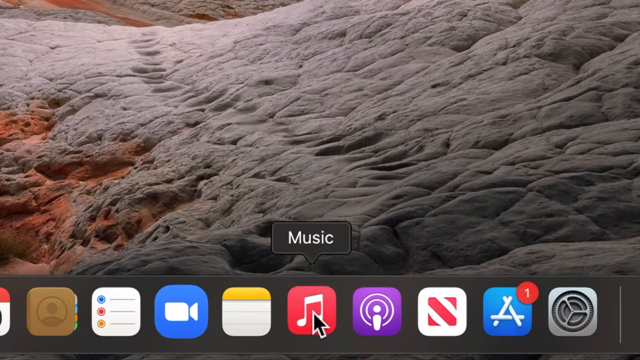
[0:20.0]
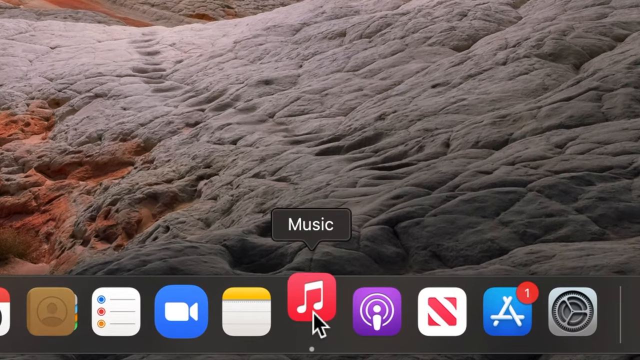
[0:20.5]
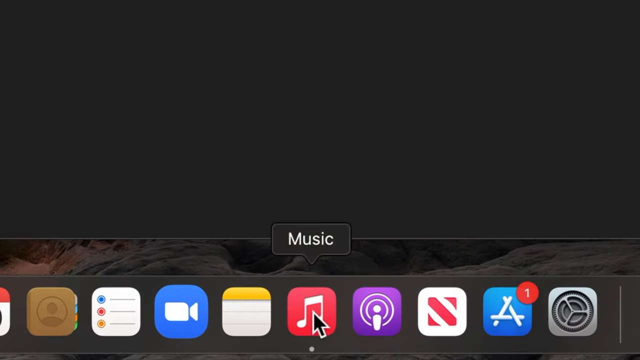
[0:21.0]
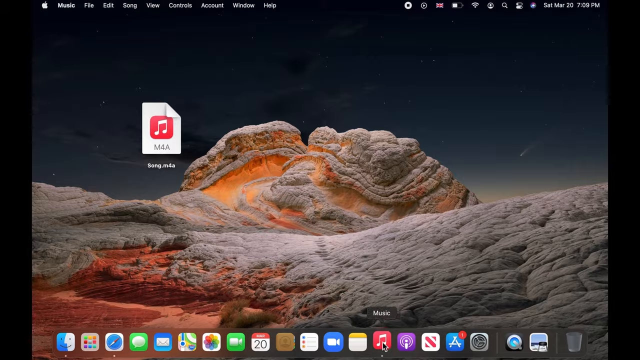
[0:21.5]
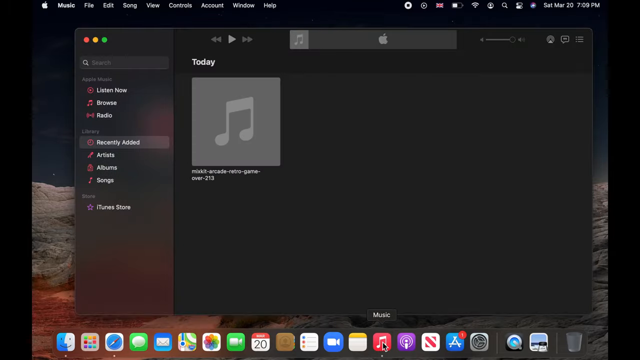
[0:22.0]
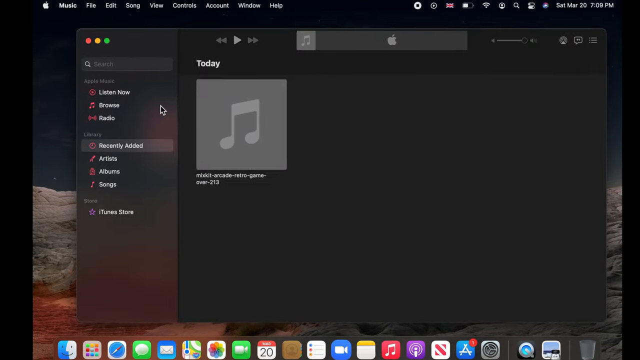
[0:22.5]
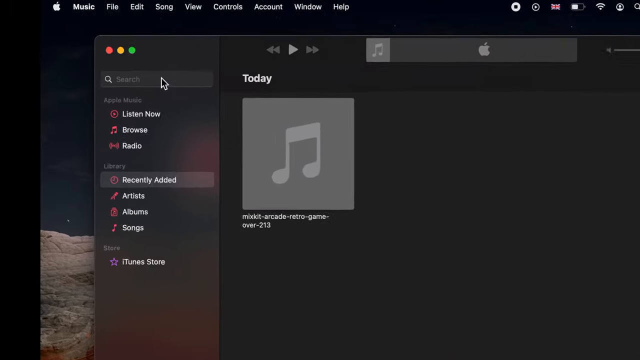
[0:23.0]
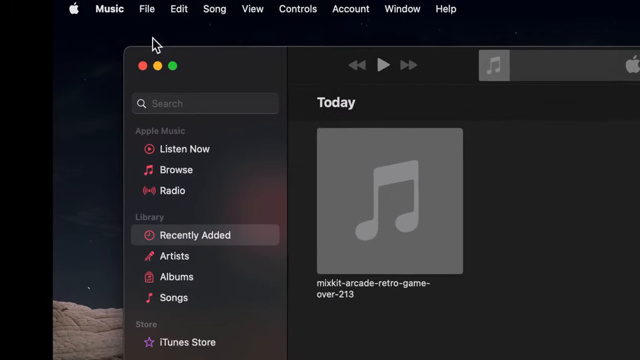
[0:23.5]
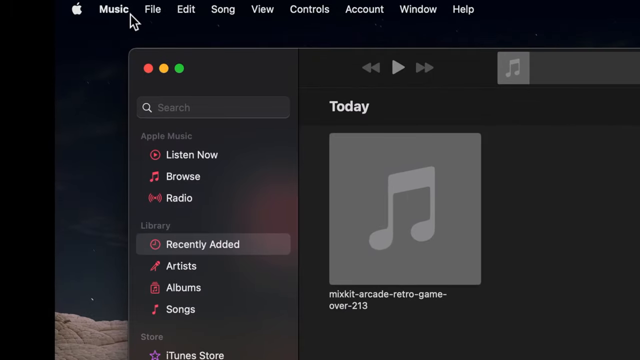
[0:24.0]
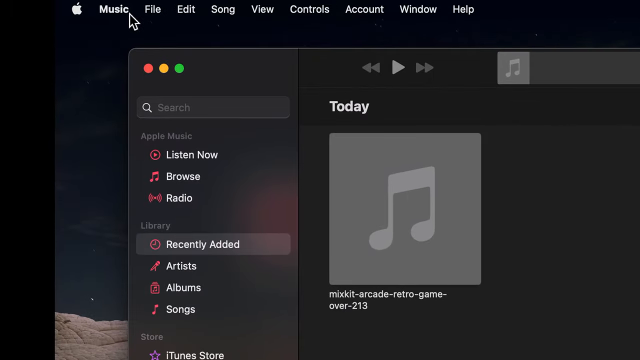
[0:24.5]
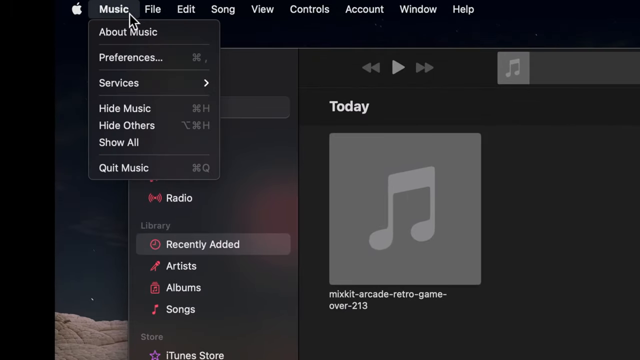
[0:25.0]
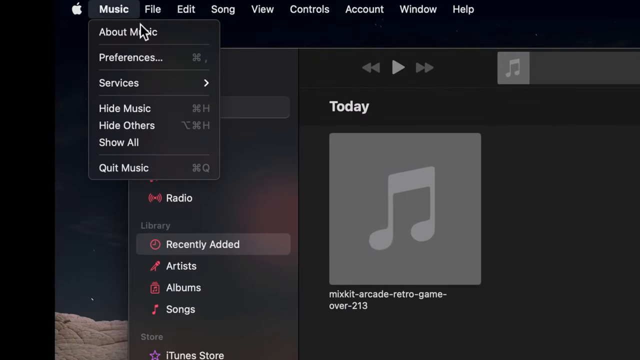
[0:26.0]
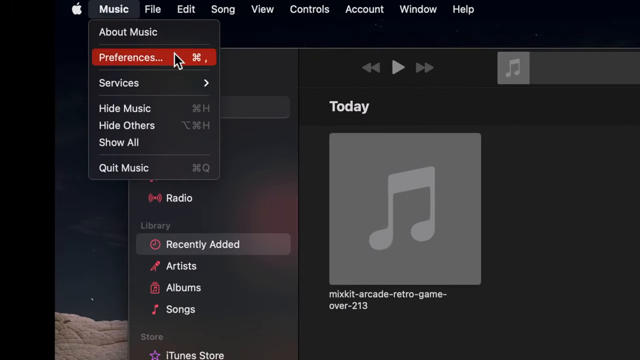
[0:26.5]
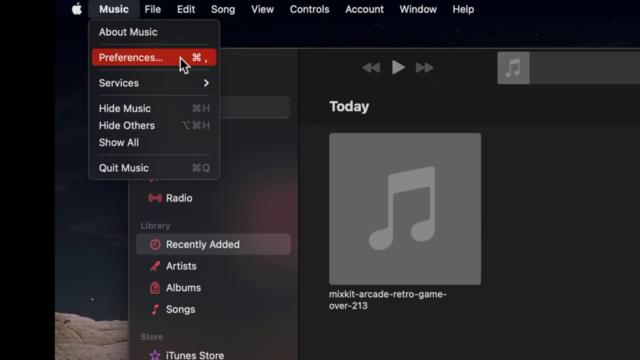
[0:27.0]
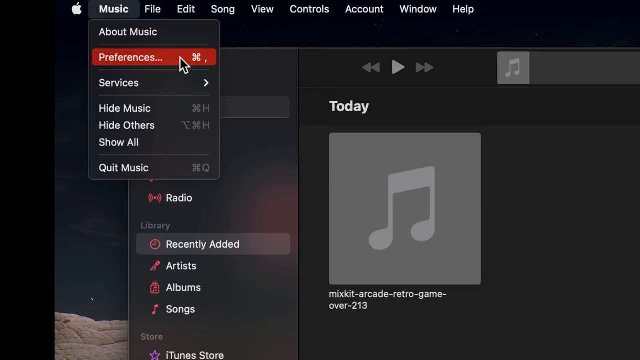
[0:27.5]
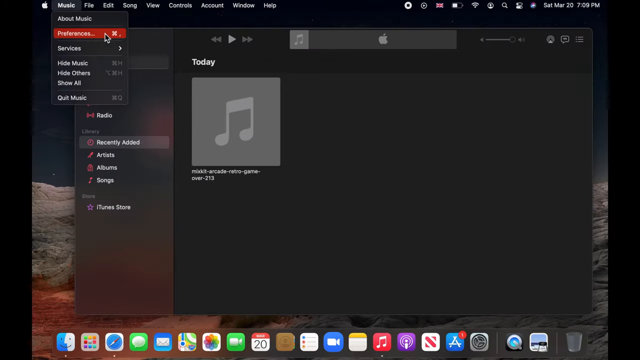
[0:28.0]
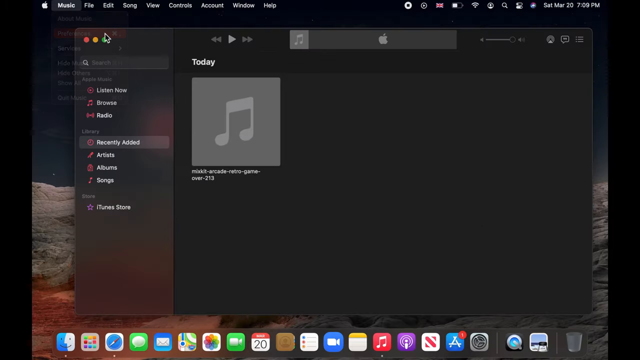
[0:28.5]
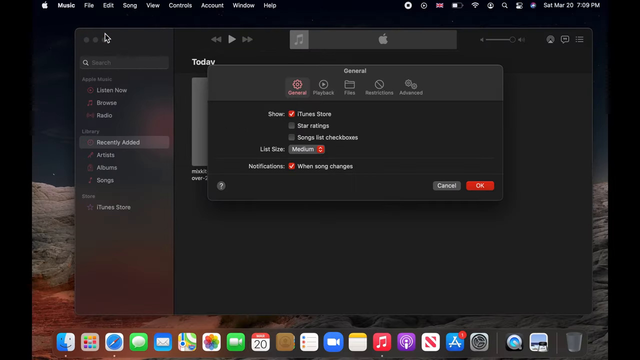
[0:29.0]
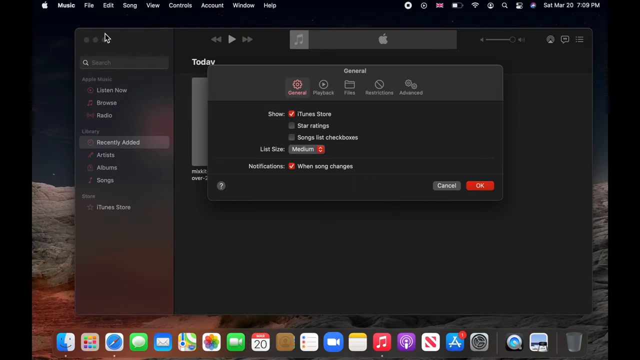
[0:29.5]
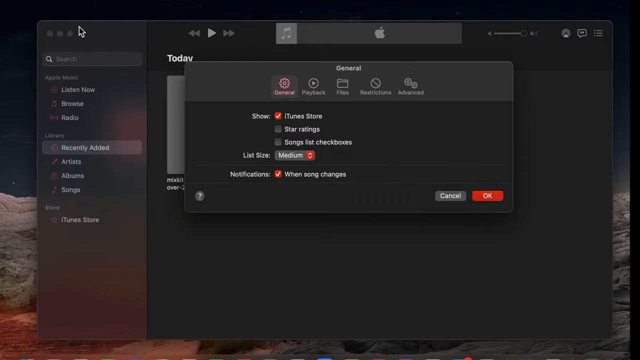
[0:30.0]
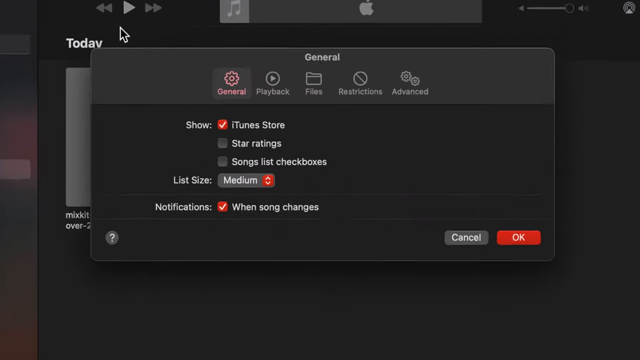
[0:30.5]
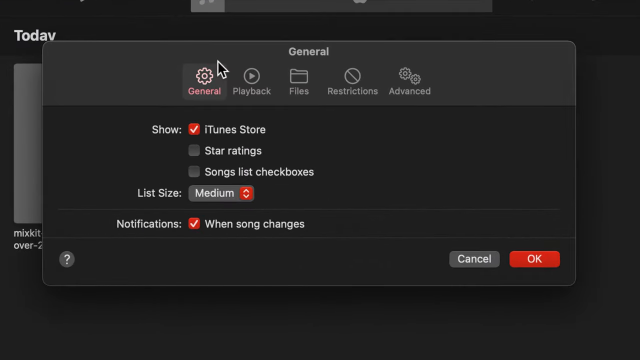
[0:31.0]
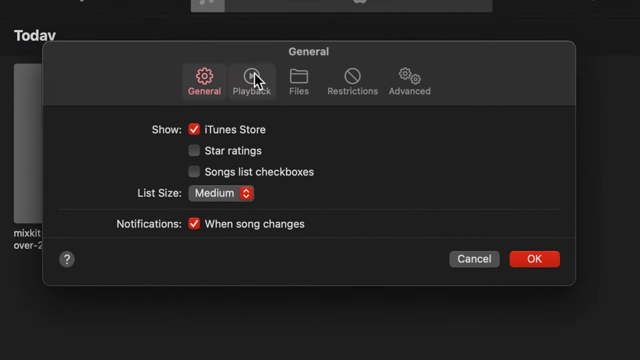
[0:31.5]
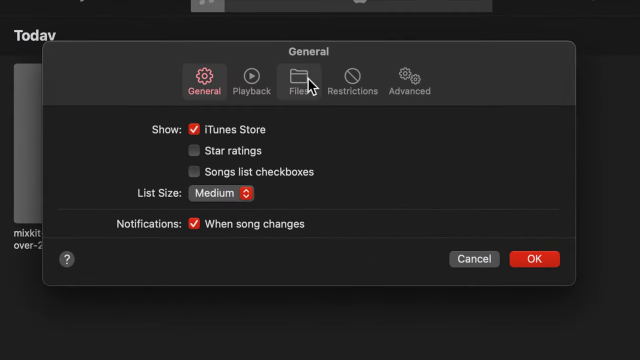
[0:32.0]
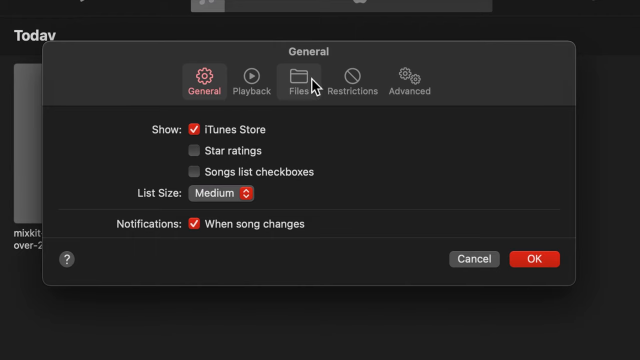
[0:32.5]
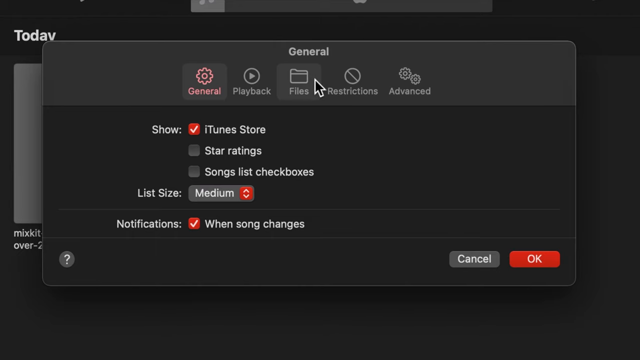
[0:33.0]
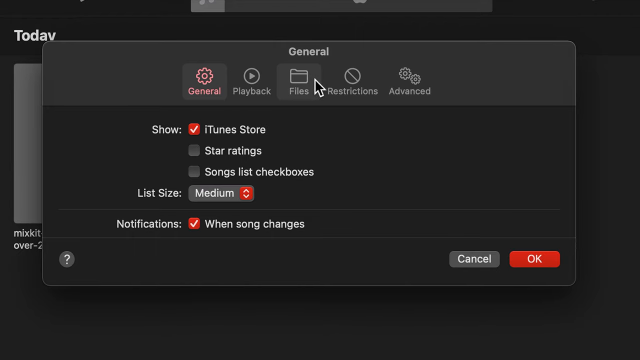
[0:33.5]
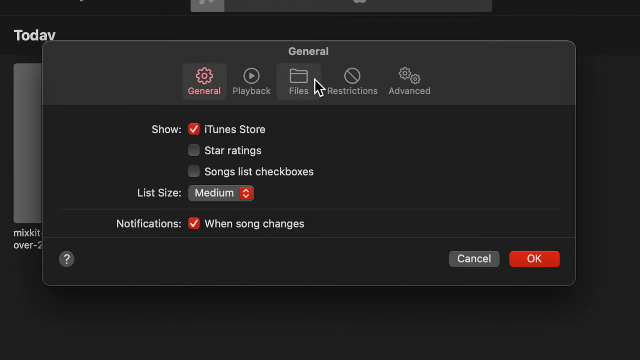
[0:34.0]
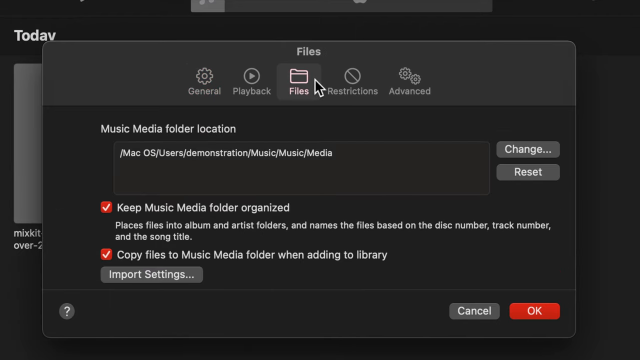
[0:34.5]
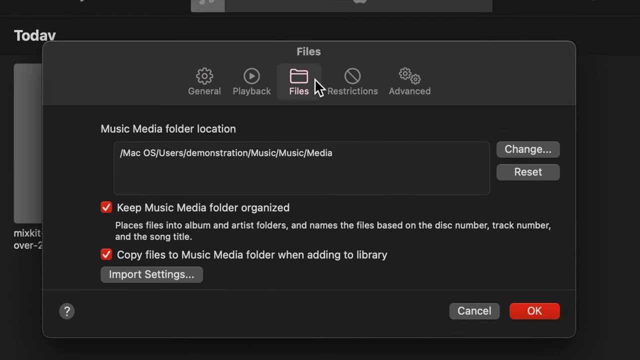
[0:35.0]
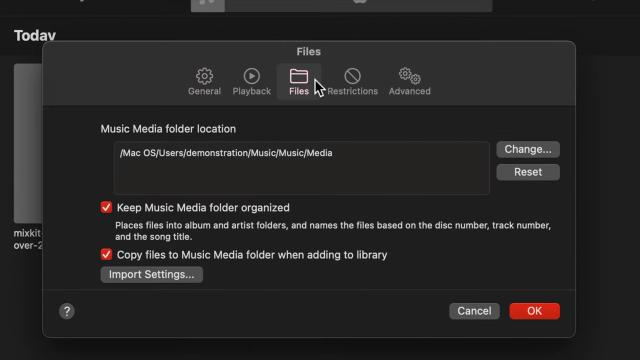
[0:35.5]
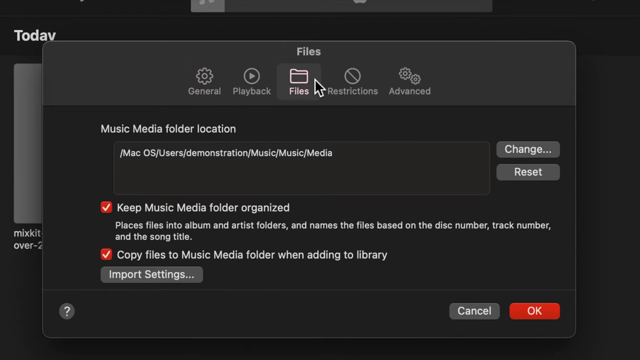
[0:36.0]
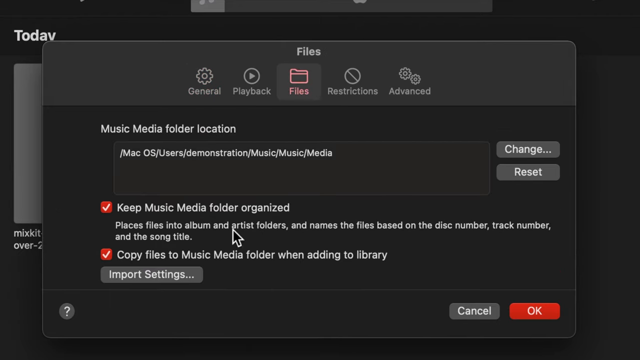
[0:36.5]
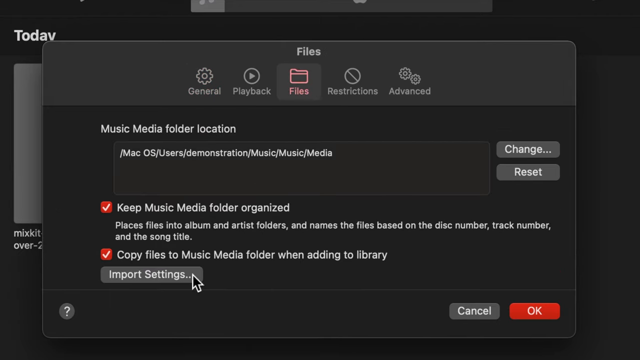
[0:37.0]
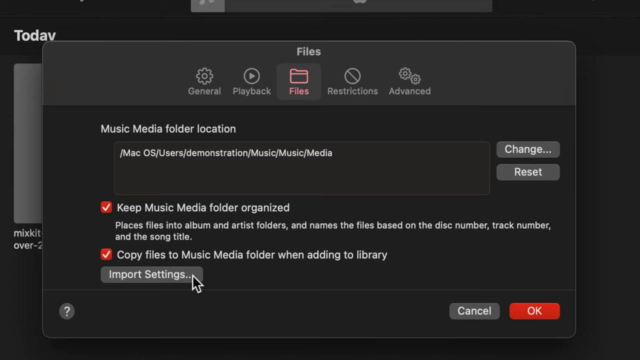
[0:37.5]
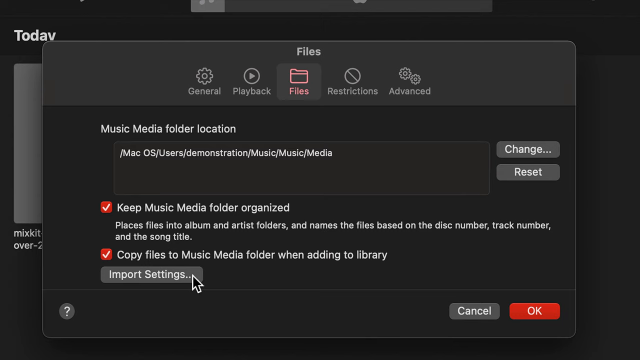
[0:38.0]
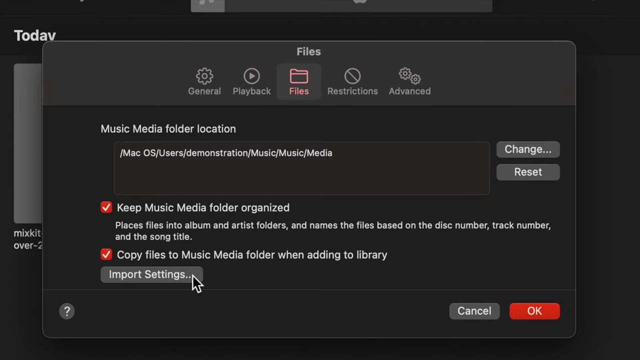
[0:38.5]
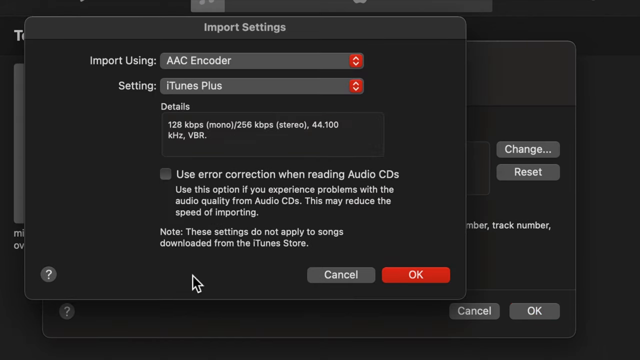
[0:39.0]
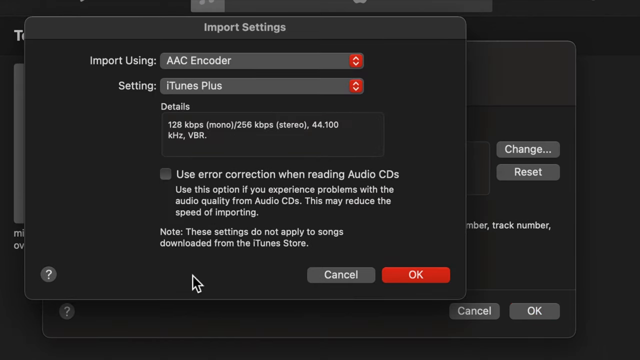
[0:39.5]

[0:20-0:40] A Music app window opens; it is all dark and has play, back and forward buttons, and there is a song titled "Mixkit-Arcade-Retro-Game-Cover-213". The user goes up to the top left and selects the Music menu, which lists options including about music, preferences, services, hide music, hide others, show all and quit music. He chooses preferences, which opens a small window that says "general" with five tabs: general, playback, files, restrictions and advanced. The user hovers the mouse over files and clicks it, opening a section about the music media folder, with its location and change and reset options. Below are two checkboxes, both selected: "keep music media player folder organized" and "copy files to music media folder when adding to library." Below them is a button that says "import settings." The user clicks it, and another window opens as the shot cuts away.